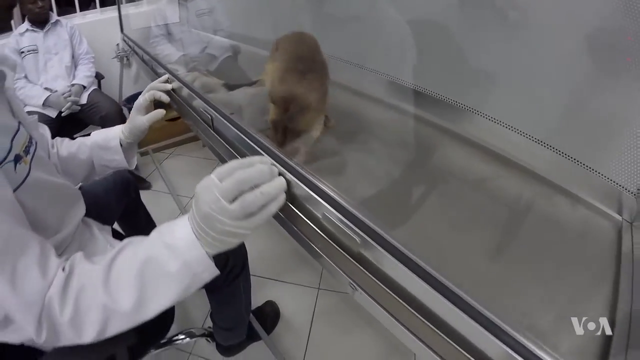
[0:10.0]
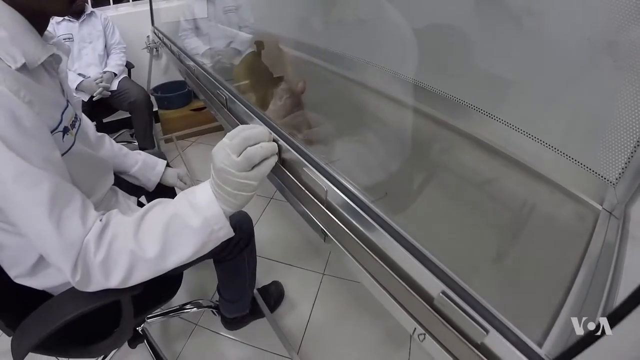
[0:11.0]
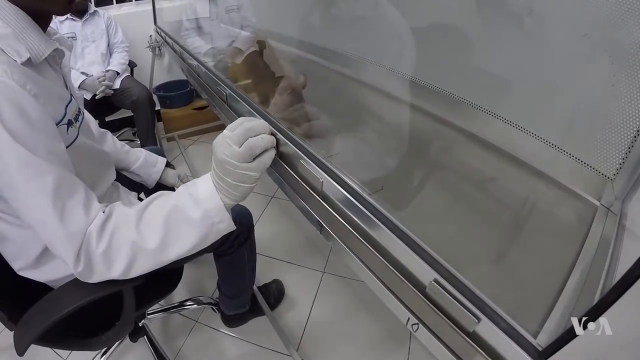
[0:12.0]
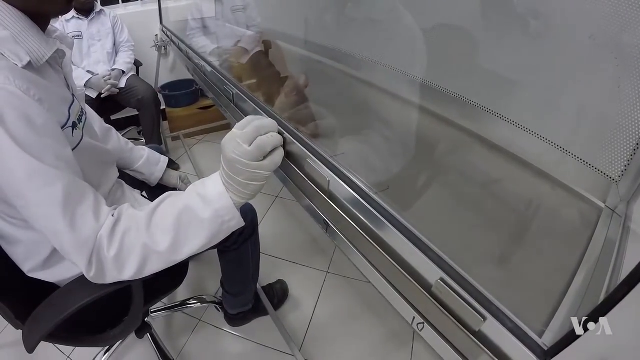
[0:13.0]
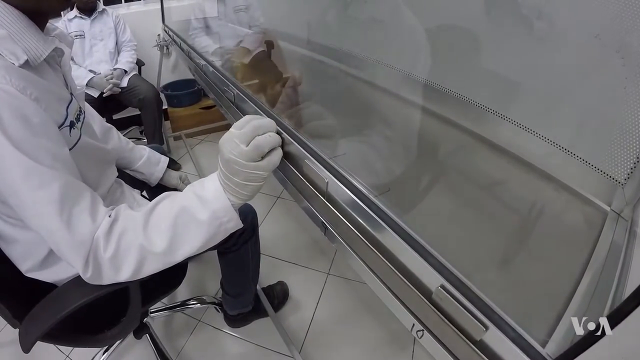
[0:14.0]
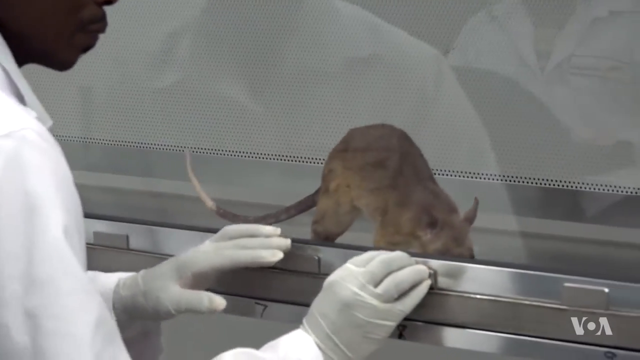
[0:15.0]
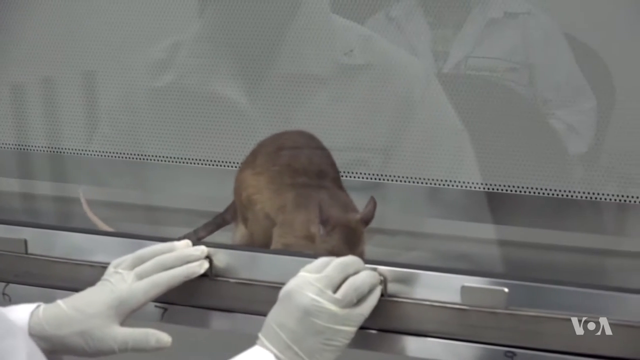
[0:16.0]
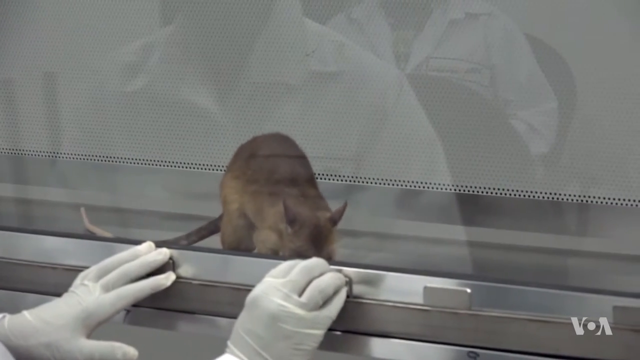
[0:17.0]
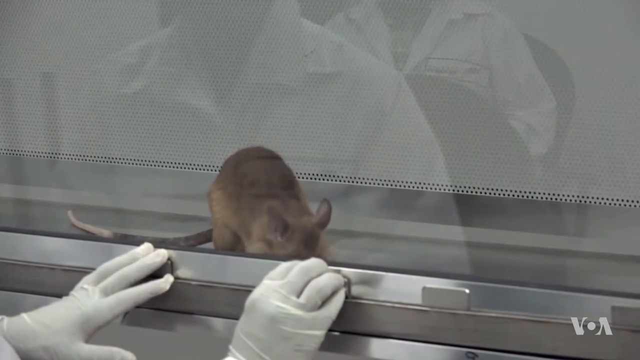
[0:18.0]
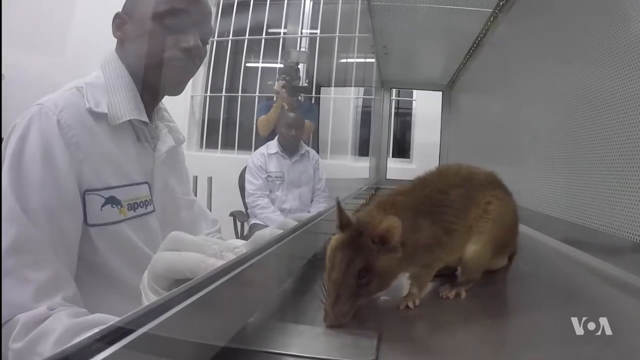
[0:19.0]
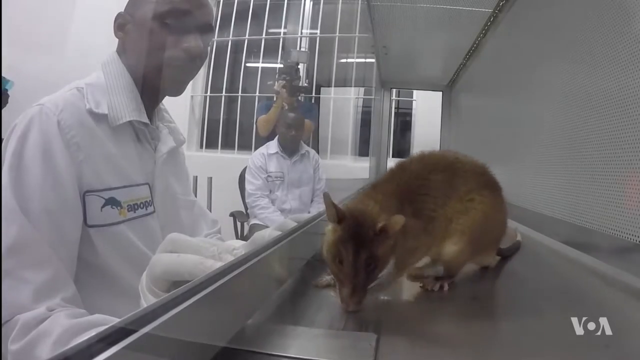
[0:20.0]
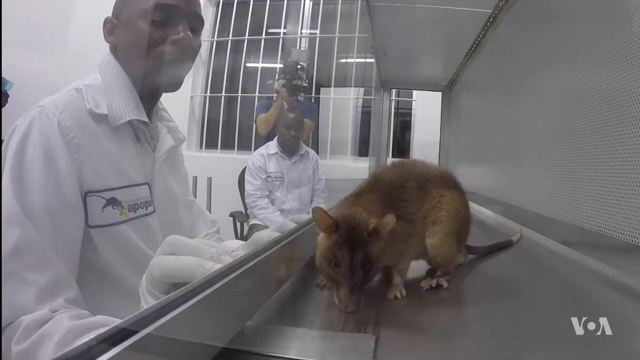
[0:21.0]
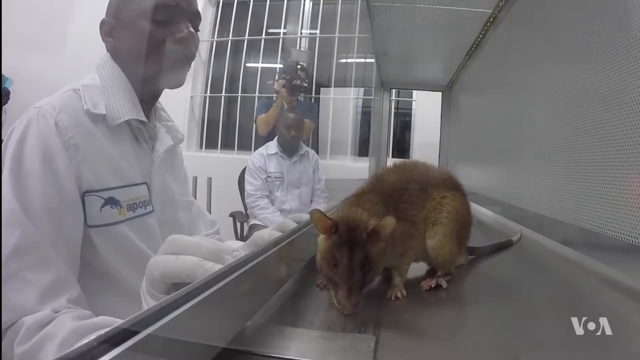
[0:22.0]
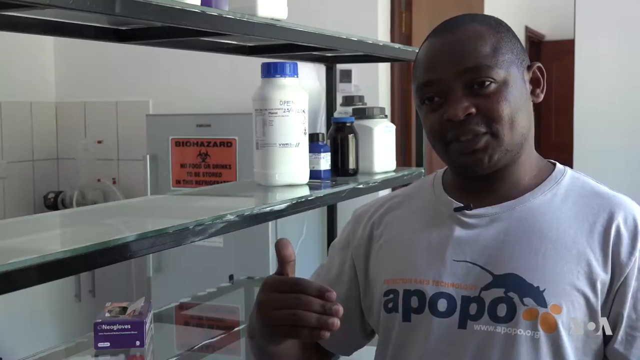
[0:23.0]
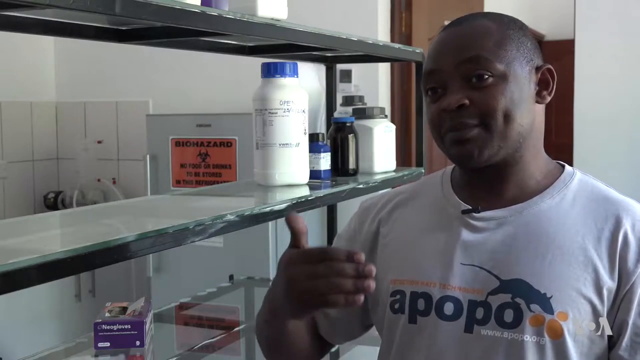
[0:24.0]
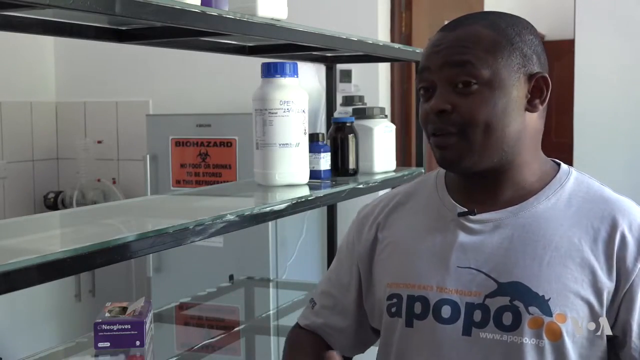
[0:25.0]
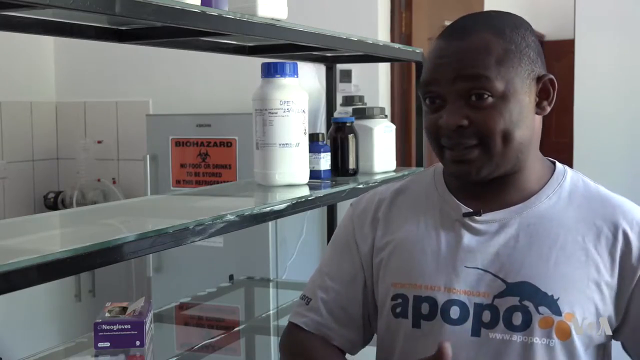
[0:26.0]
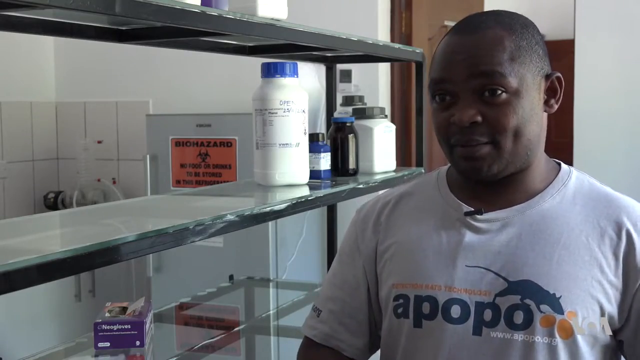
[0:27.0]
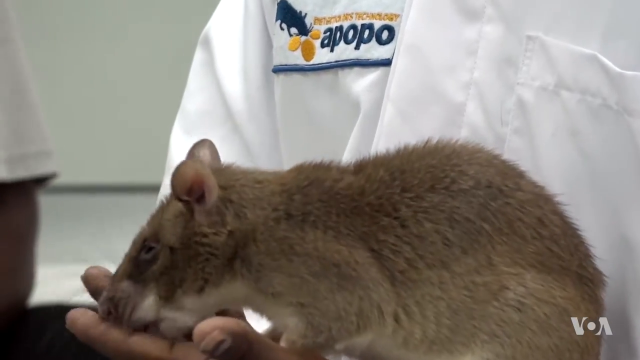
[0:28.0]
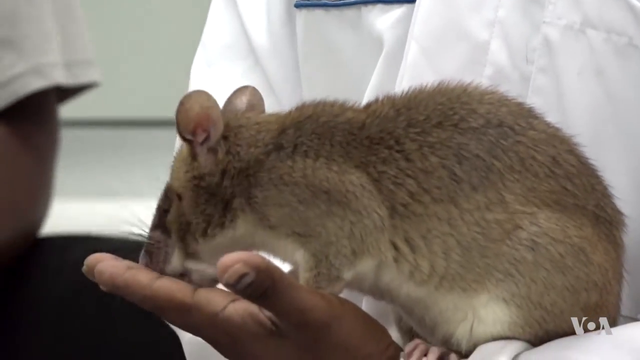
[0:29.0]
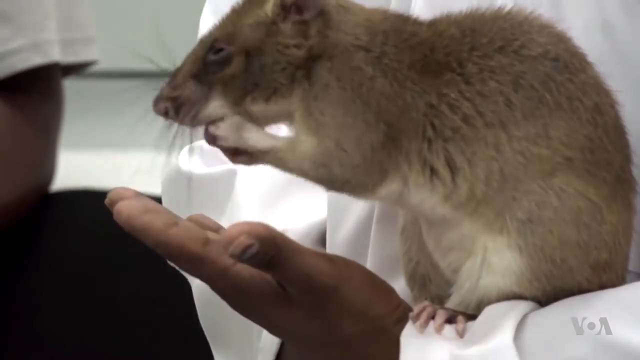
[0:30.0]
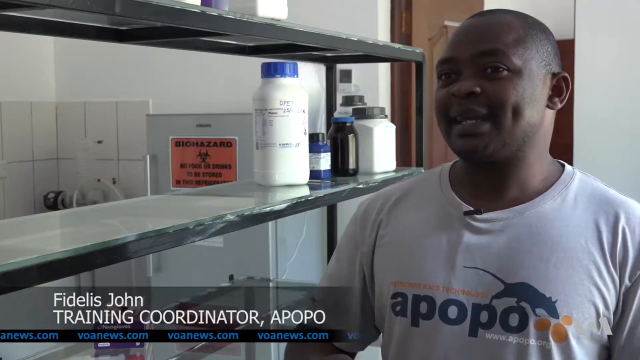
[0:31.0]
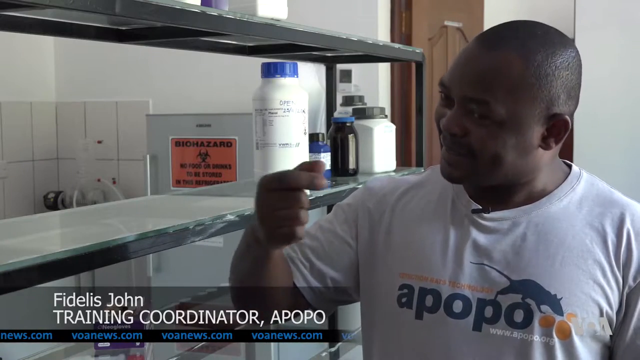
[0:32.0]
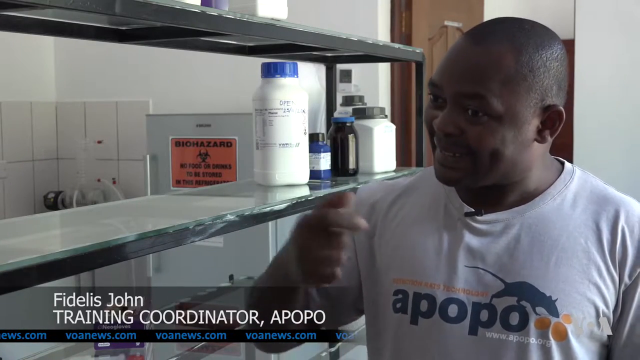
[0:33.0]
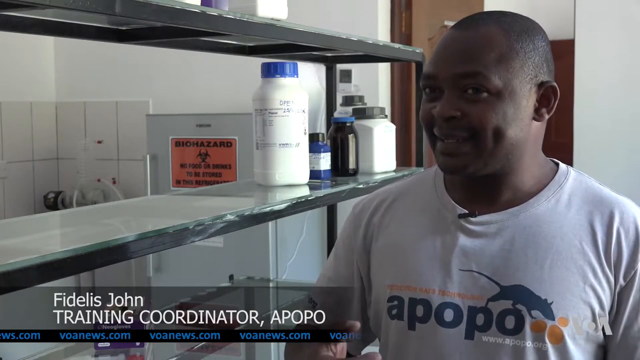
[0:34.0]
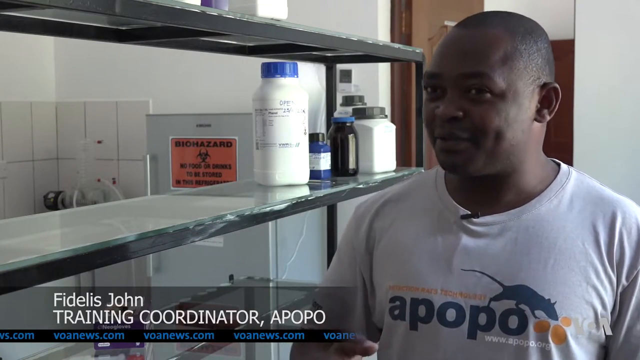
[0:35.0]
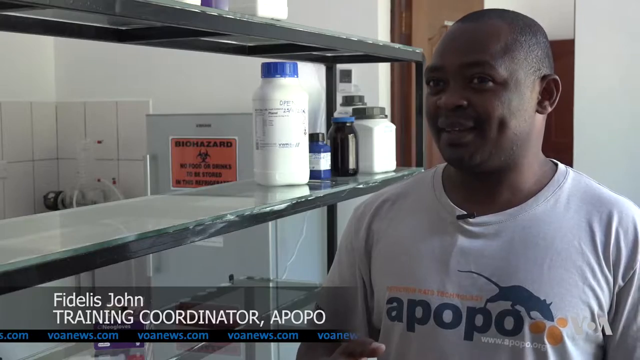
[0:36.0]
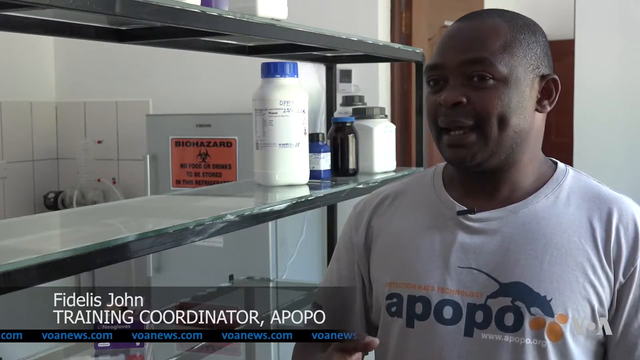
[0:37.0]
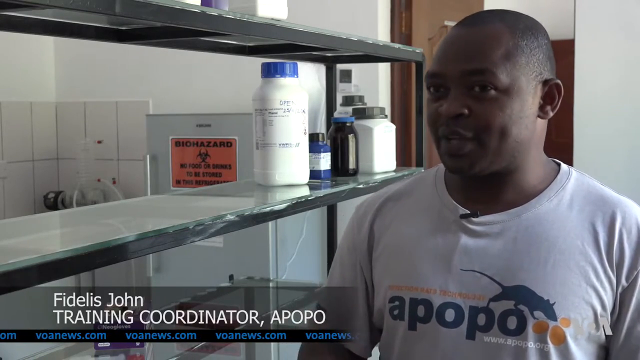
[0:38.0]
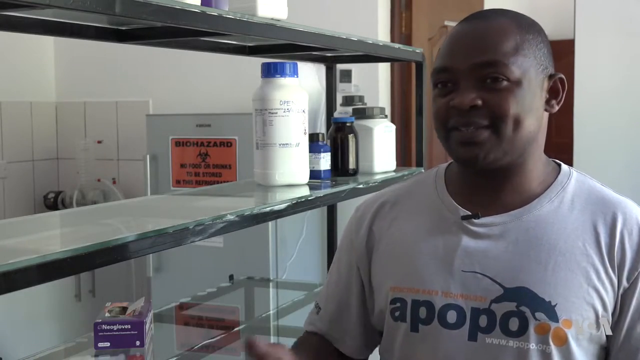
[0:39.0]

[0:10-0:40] The rat keeps trying to find a way out, maybe trying to dig out. It then looks like it is eating or biting on the metal, which looks very strange. Partway through, the scientists following it come into view; they are both bald and wear white scientist coats. A man with a camera is visible in the far back corner. The same scientist is then shown in an interview-style shot. His shirt has a logo, apparently for the company he works for, called Apopo, with a rat on top of the logo. It appears to be some sort of rat-specialized testing facility.